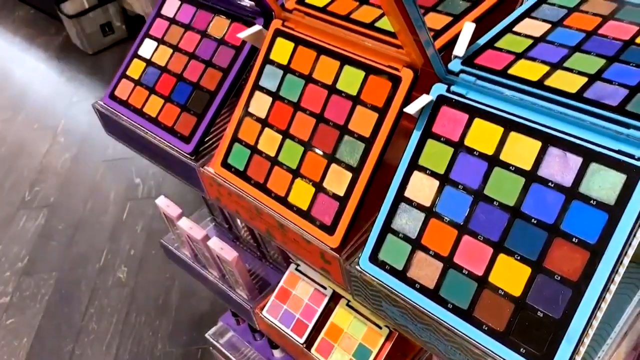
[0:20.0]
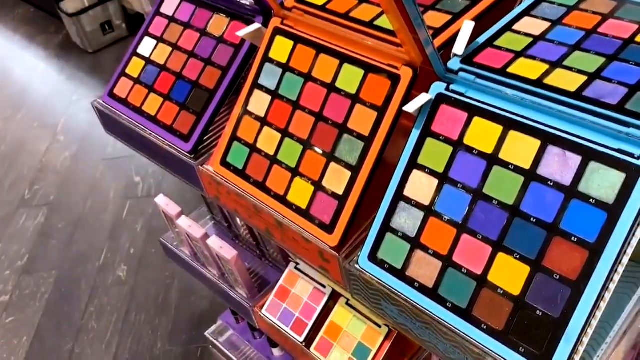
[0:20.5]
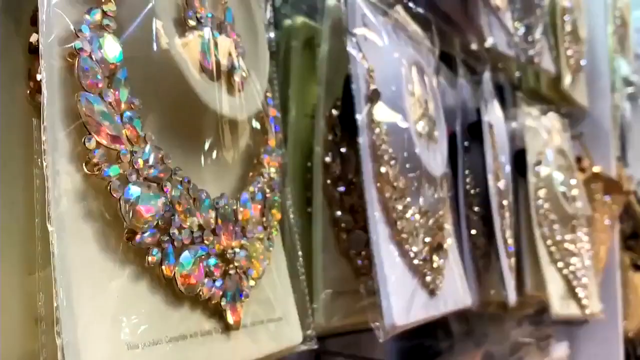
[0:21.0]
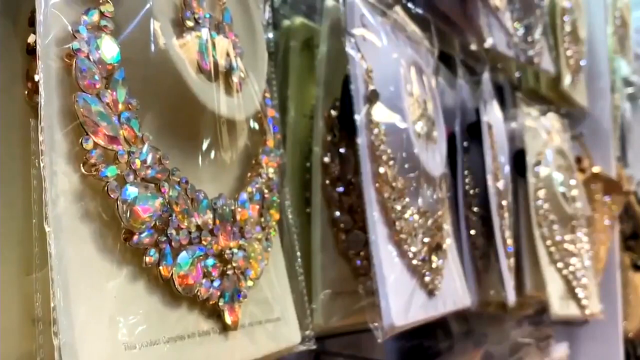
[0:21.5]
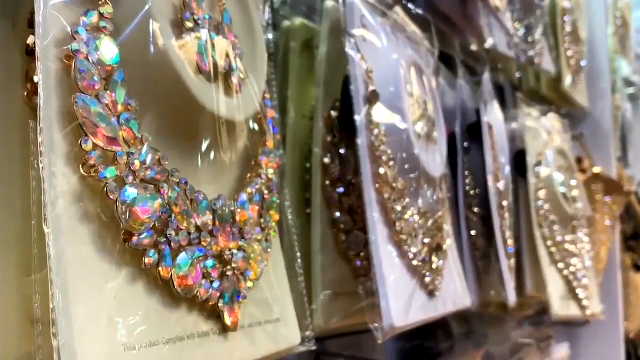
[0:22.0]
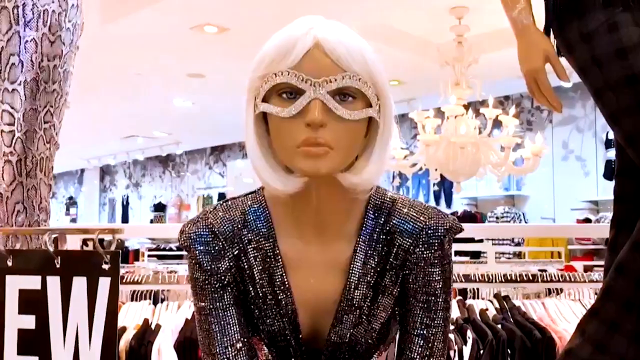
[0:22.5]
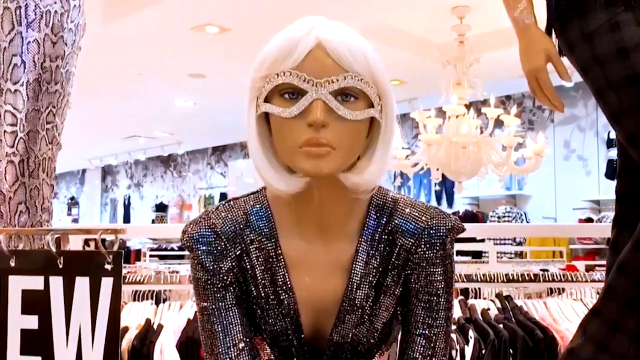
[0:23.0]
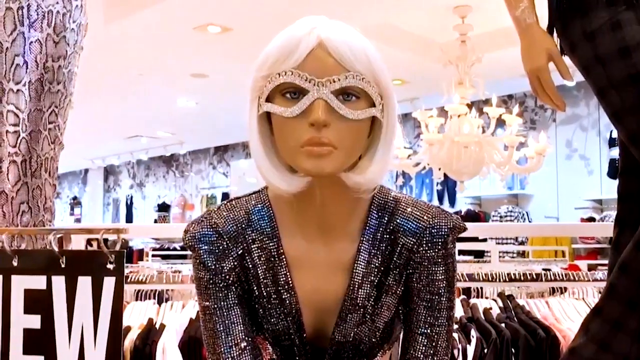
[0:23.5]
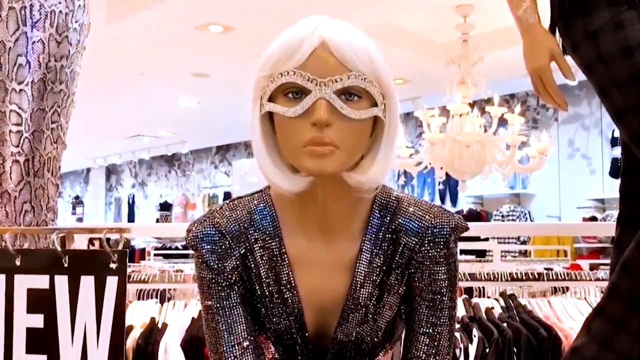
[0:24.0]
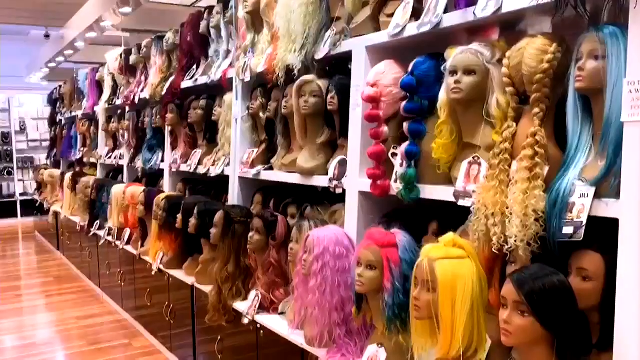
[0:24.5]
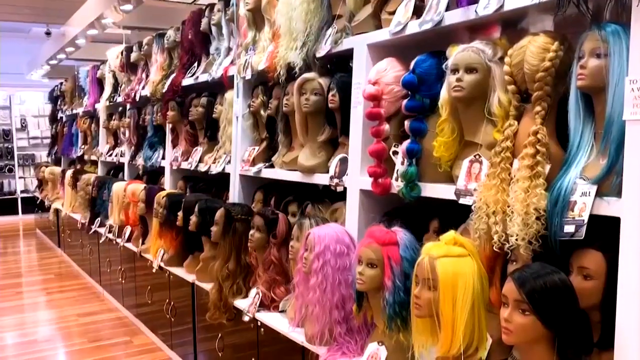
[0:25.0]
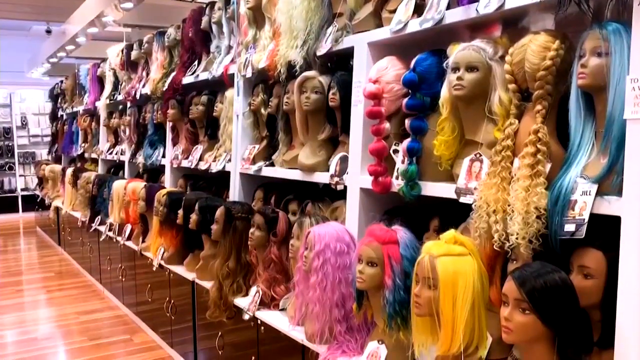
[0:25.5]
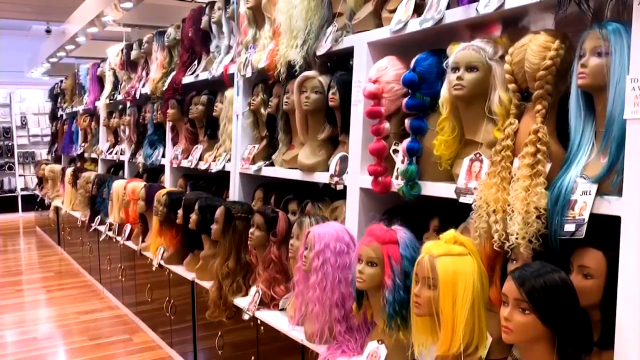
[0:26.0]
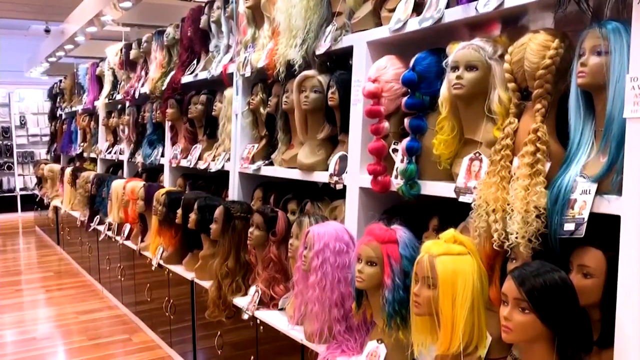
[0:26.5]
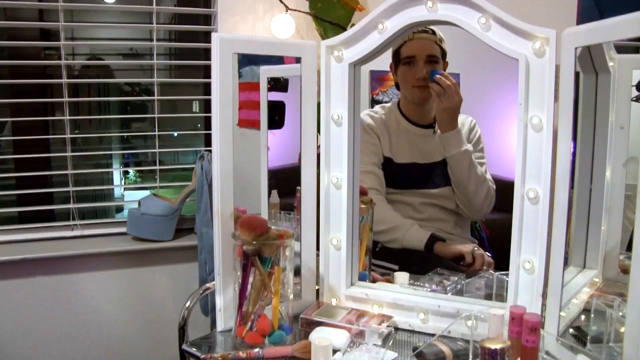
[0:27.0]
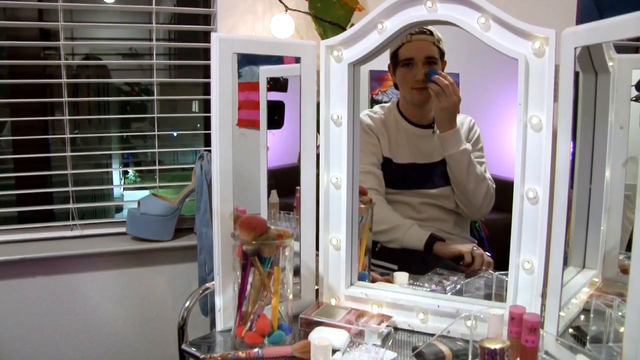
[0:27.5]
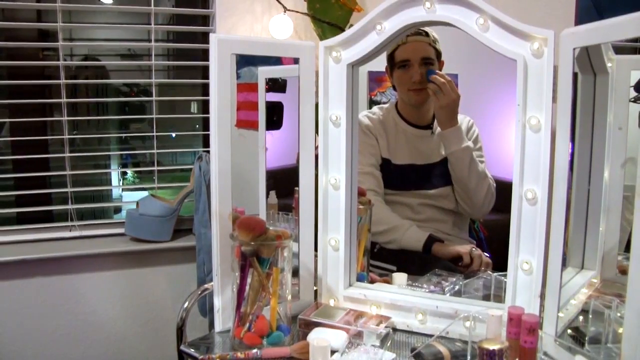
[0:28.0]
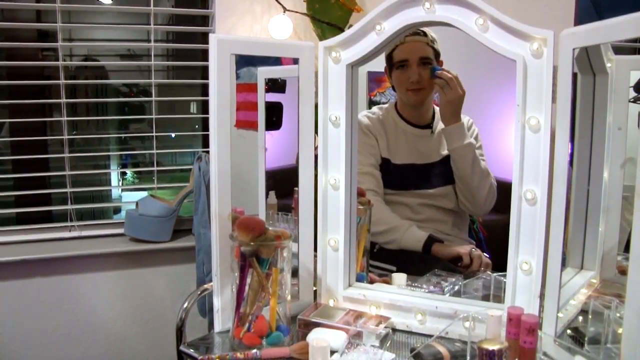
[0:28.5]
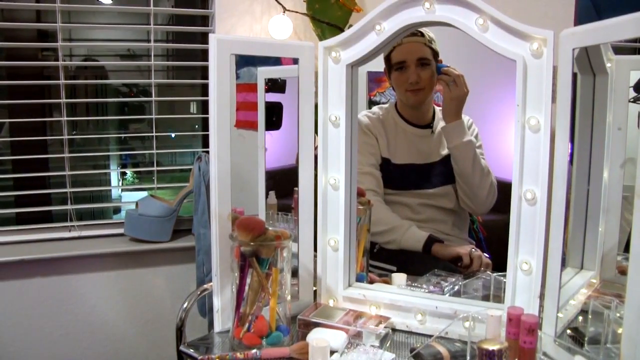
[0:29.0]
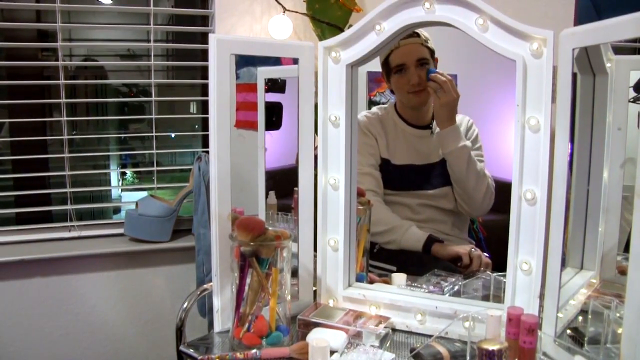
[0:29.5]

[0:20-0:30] Four very brightly coloured makeup palettes appear, among them a purple one, an orange one and a blue one, each with a mirror on top. Next is a close-up of costume jewellery wrapped in plastic packaging. Then a mannequin with a short white bob haircut appears, wearing a gem-covered eye mask and a sequin-style dark jacket or dress. The background shows a clothes store, and a white chandelier hanging from the ceiling can be seen over the mannequin's left shoulder. Rows of mannequin heads follow, each wearing a different wig in a variety of colours, shapes and lengths. The view then shows a mirror: the person who was doing their makeup is seen in its reflection, applying foundation with the blue sponge, using their left hand to dab it onto their left cheek.